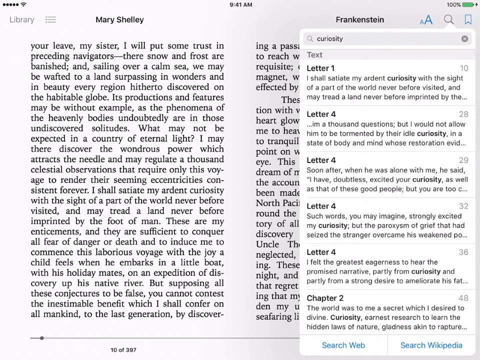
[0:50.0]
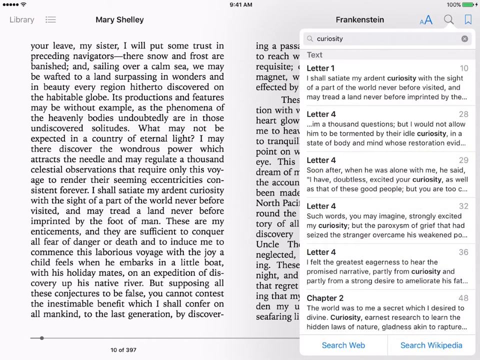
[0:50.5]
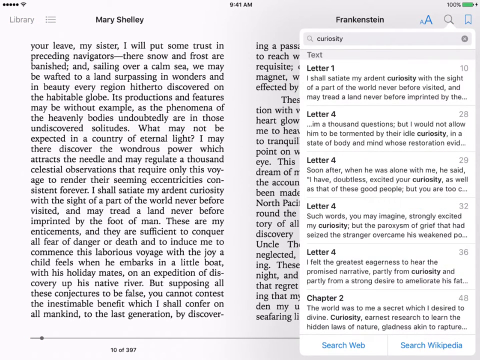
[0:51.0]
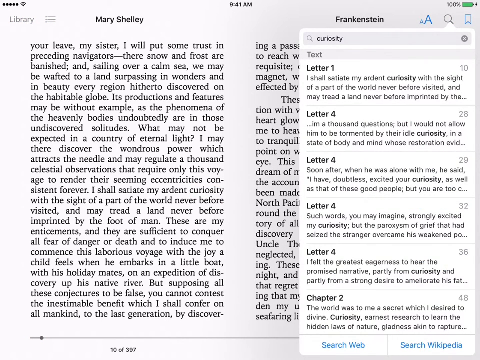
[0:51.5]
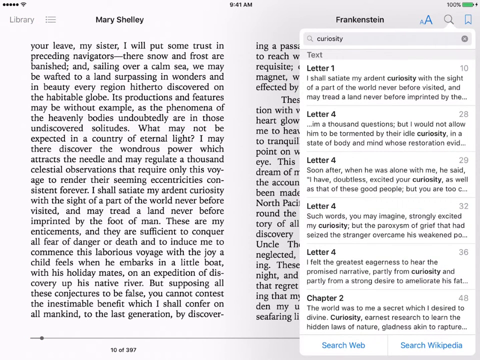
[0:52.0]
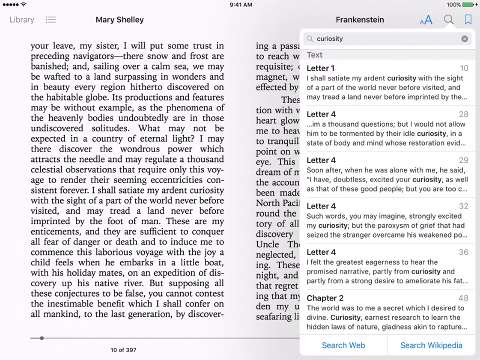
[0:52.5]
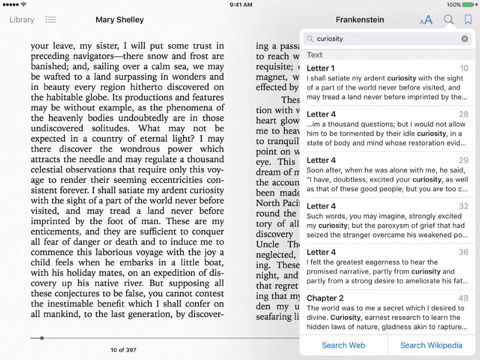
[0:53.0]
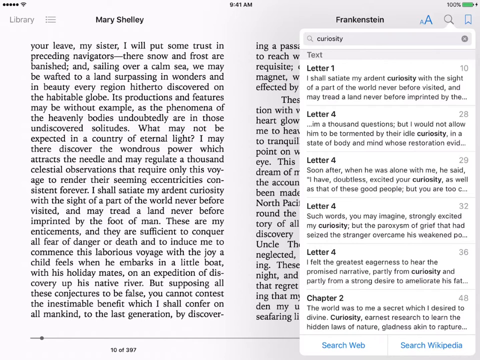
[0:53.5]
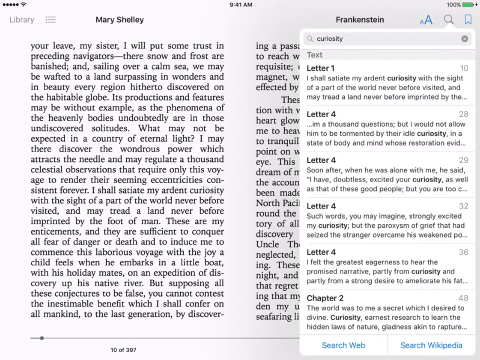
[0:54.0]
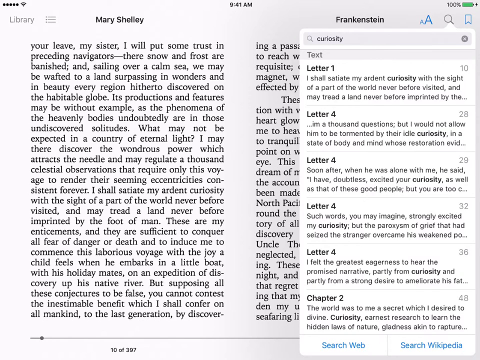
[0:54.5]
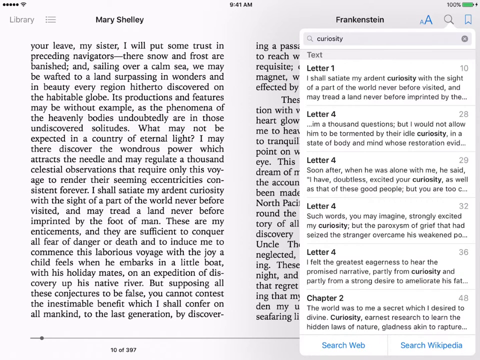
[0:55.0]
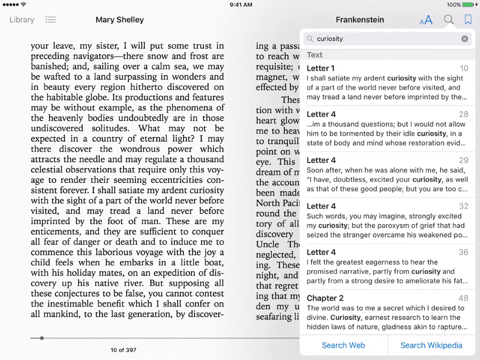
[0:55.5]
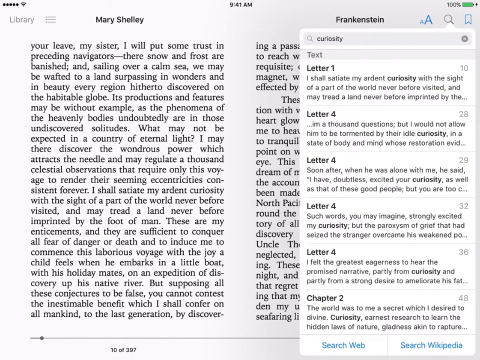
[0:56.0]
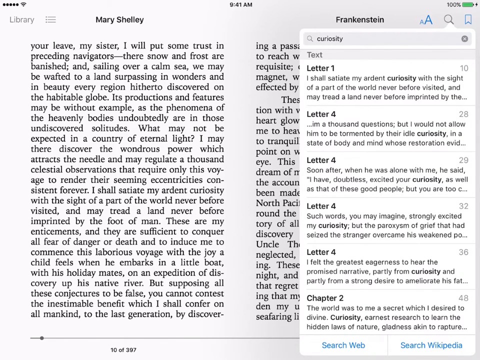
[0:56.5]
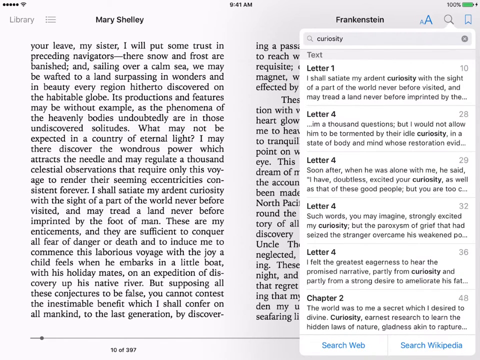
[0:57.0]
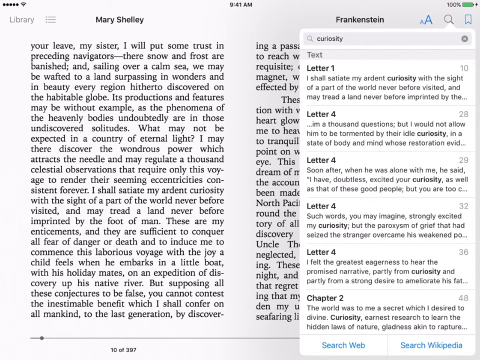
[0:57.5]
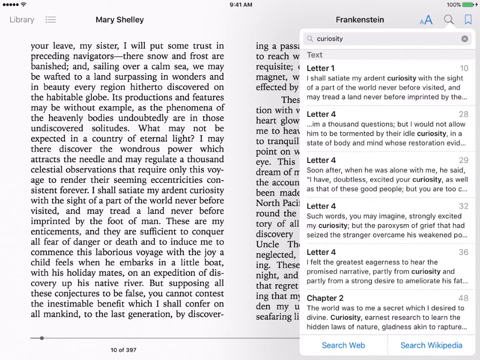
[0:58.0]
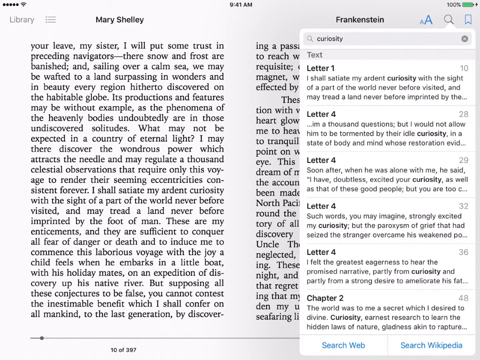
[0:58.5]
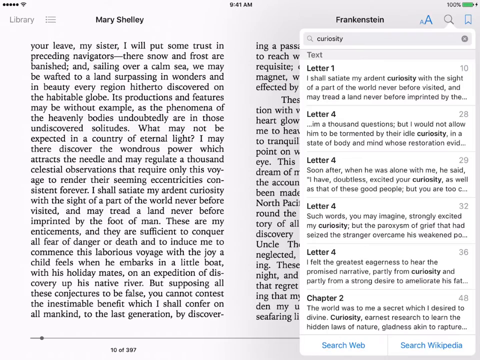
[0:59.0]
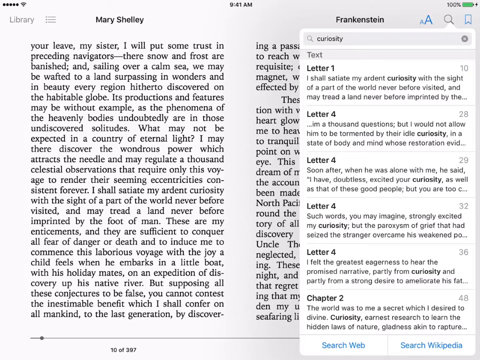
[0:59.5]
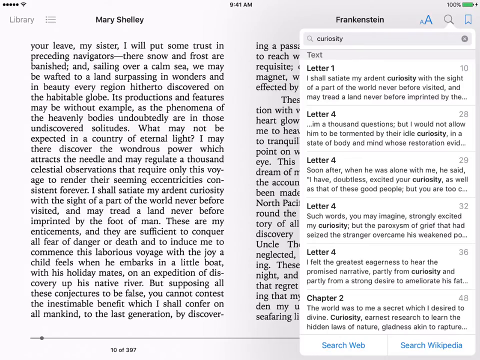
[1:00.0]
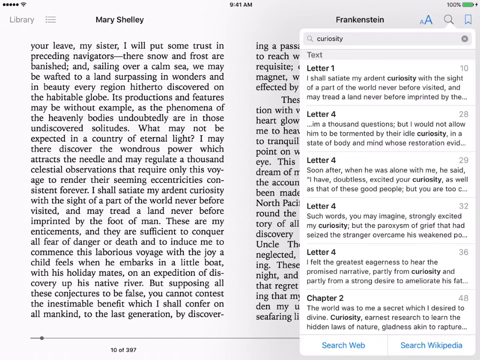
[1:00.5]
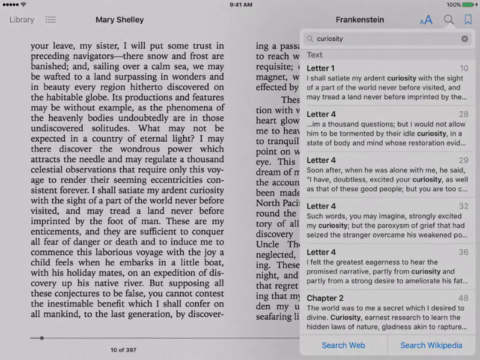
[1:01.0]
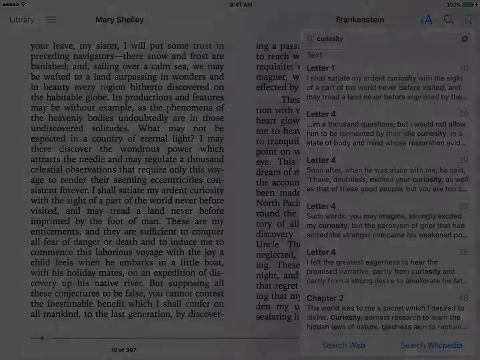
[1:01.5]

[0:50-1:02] The search results for "curiosity" are shown. Letter 1, page 10: "I shall associate my ardent curiosity with the sight of the part of the world never before visited, and may tread a land never before imprinted." Letter 4, page 28: "but I will not allow him to be tormented by their idle curiosity." Letter 4, page 29: "Soon after, when he was alone with me, he said, I have doubtless excited your curiosity as well as that of these good people." Letter 4, page 32: "Such words, you may imagine, strongly excited my curiosity, but the paroxysm of grief that had seized the stranger overcame his weakened." Letter 4, page 36: "I felt the greatest eagerness to hear the promised narrative partly from curiosity and partly from a strong desire to ameliorate his." Chapter 2: "the world was to me a secret which I desired to divine. Curiosity, earnest research to learn the hidden." The colors on the screen are white, gray and black, with the gray fading and shading from light gray into a deep black. The screen still shows the book's name, the library, the time and the battery.